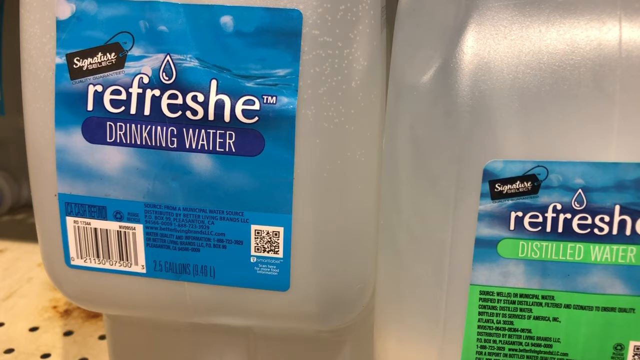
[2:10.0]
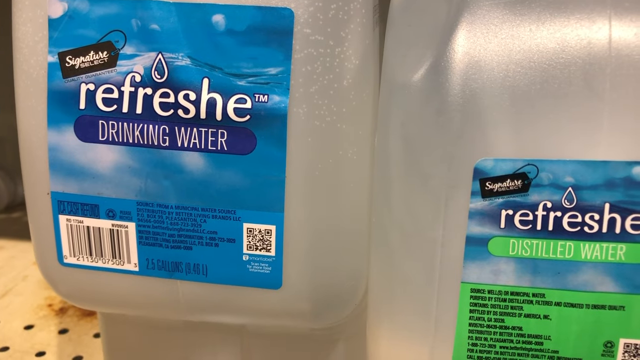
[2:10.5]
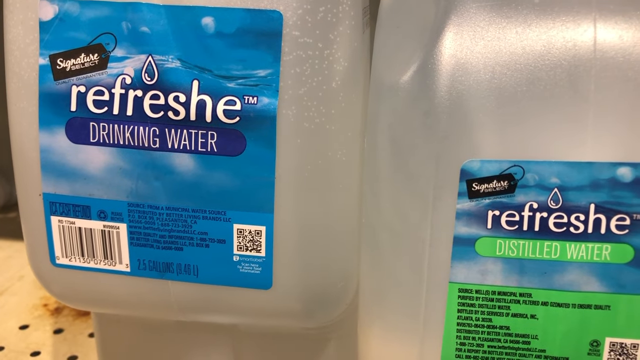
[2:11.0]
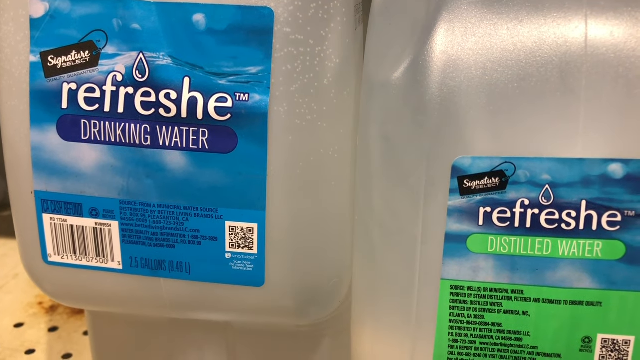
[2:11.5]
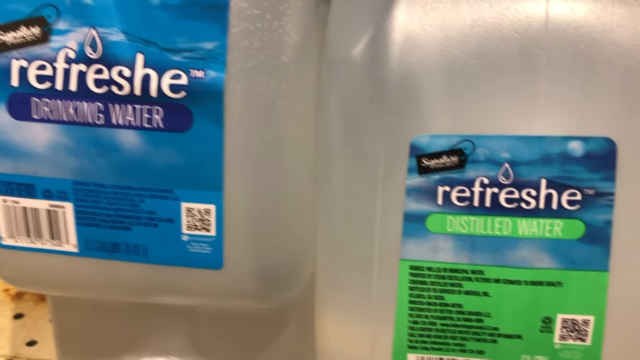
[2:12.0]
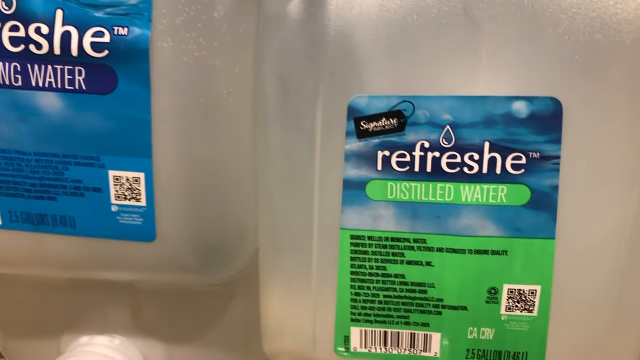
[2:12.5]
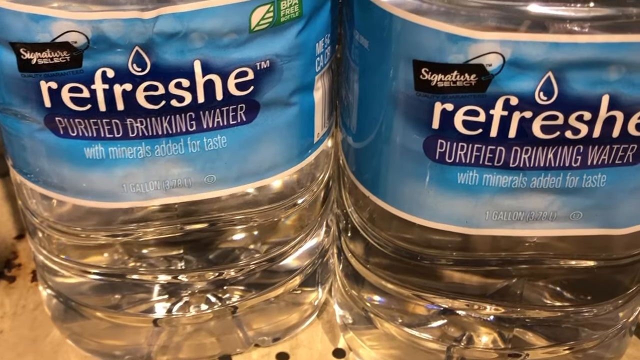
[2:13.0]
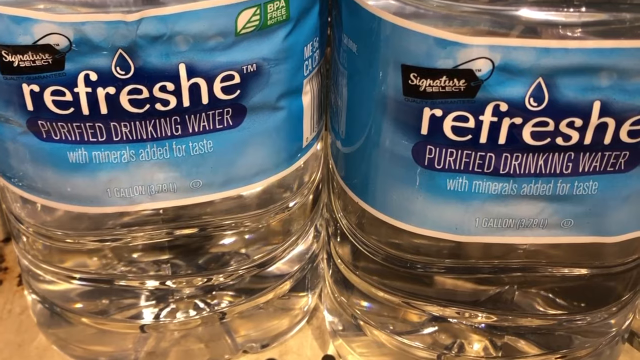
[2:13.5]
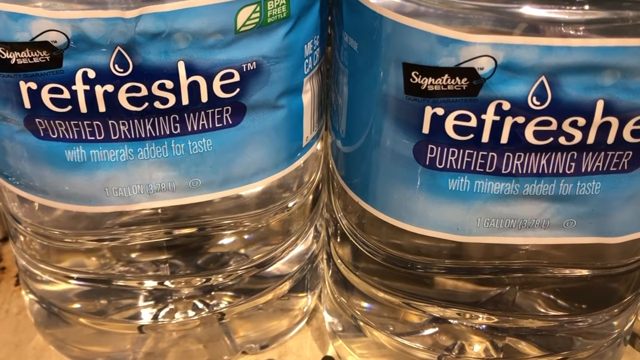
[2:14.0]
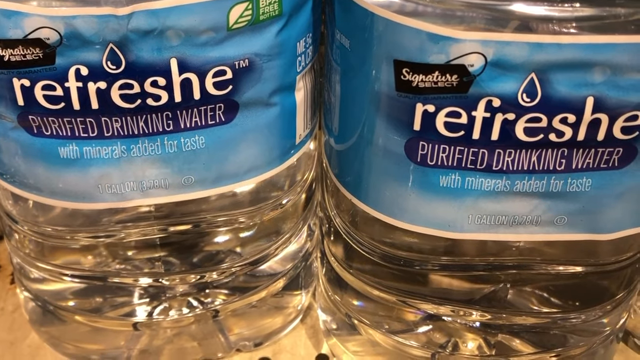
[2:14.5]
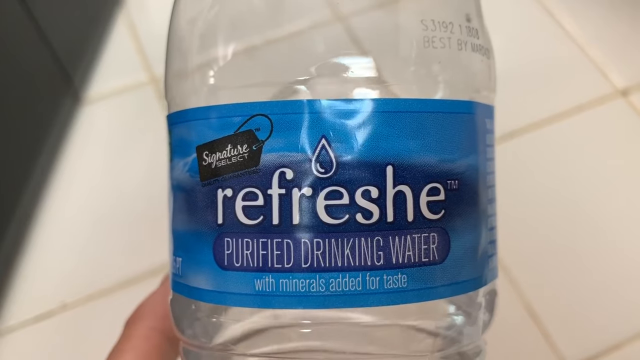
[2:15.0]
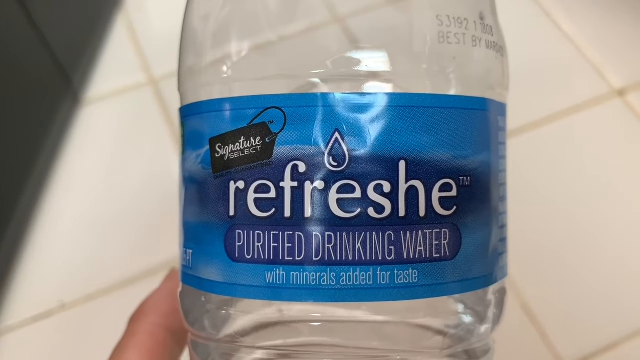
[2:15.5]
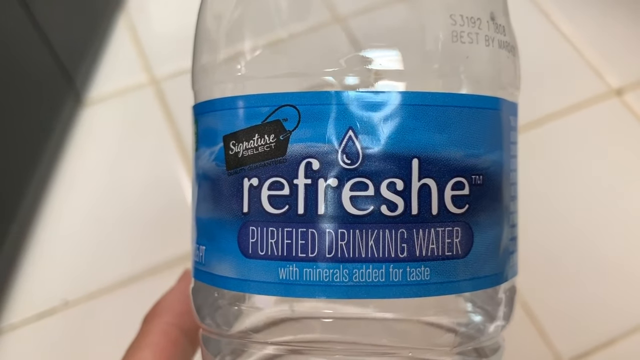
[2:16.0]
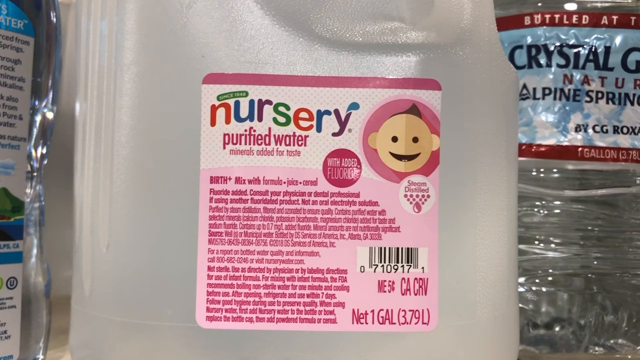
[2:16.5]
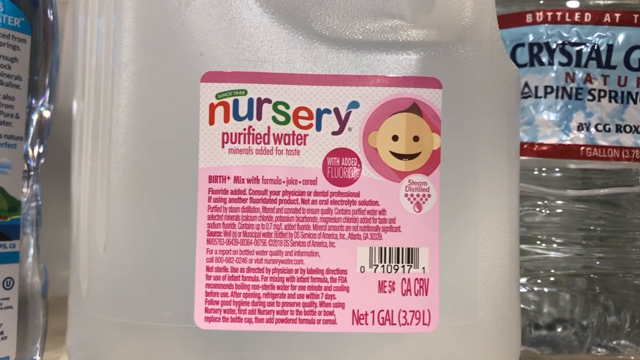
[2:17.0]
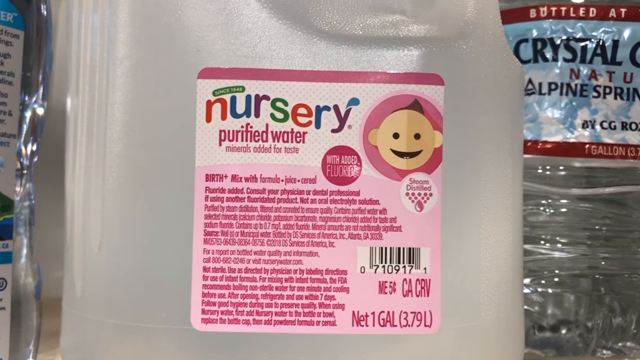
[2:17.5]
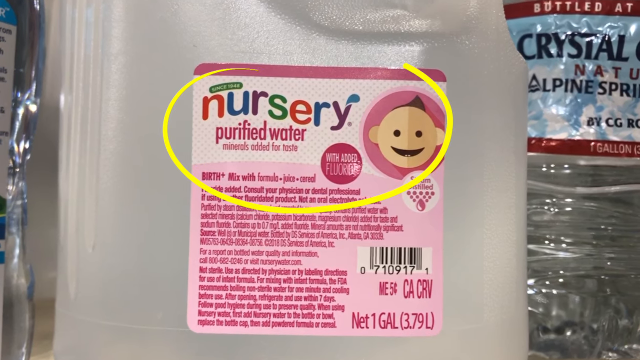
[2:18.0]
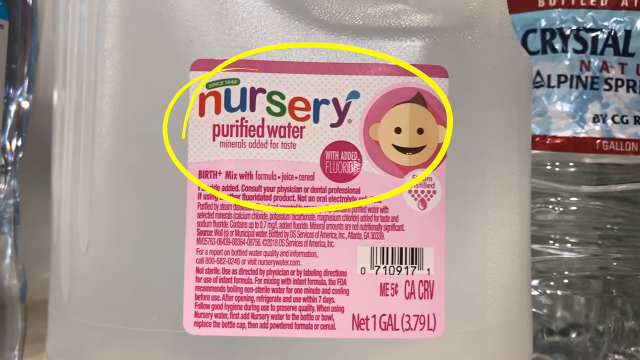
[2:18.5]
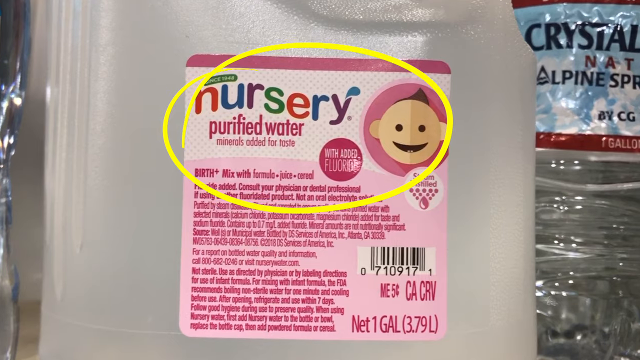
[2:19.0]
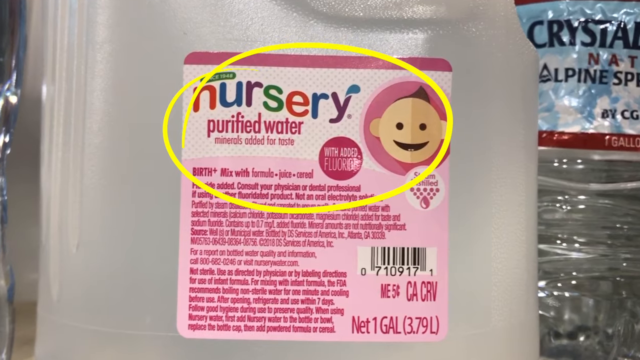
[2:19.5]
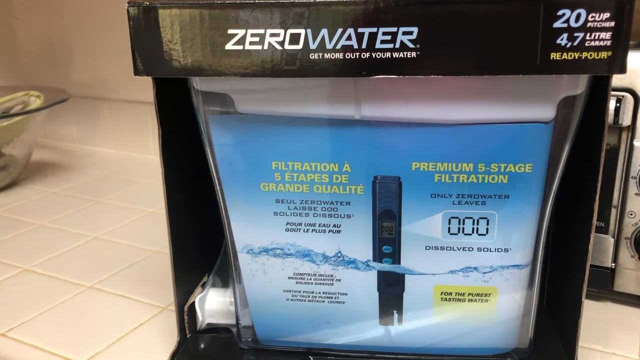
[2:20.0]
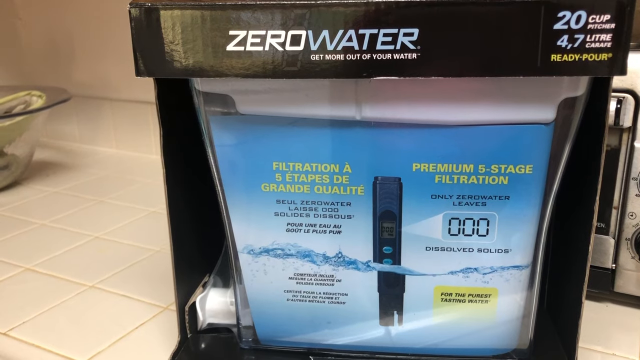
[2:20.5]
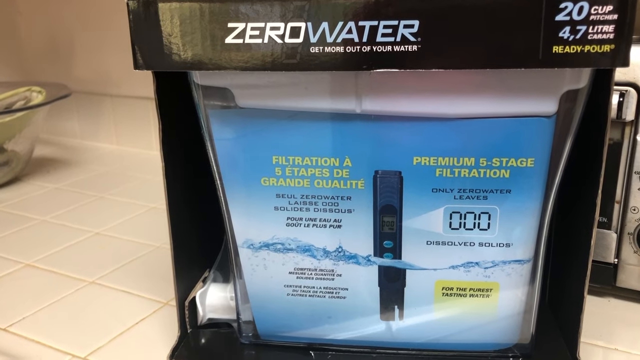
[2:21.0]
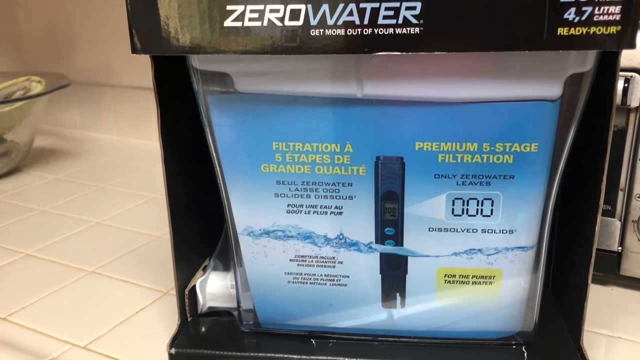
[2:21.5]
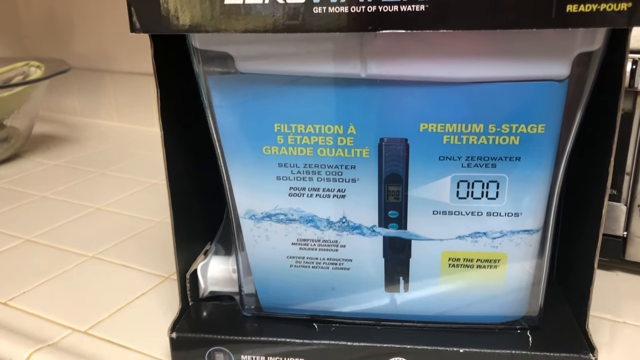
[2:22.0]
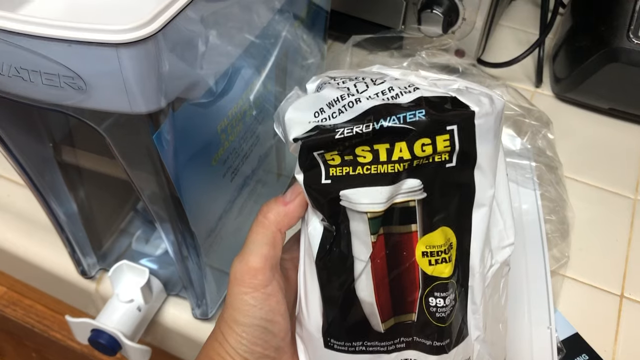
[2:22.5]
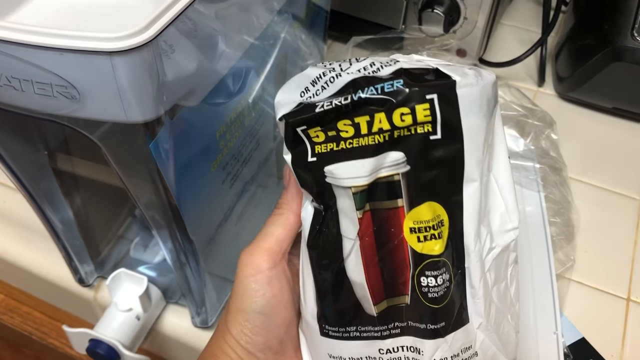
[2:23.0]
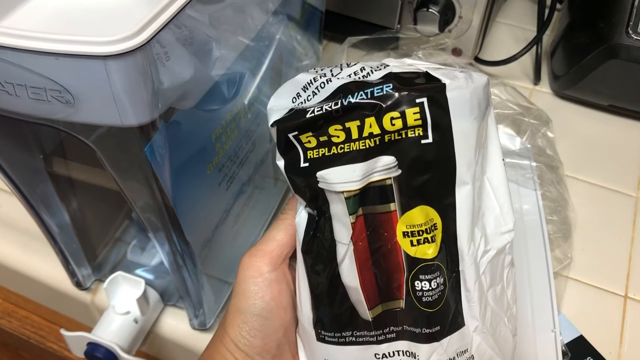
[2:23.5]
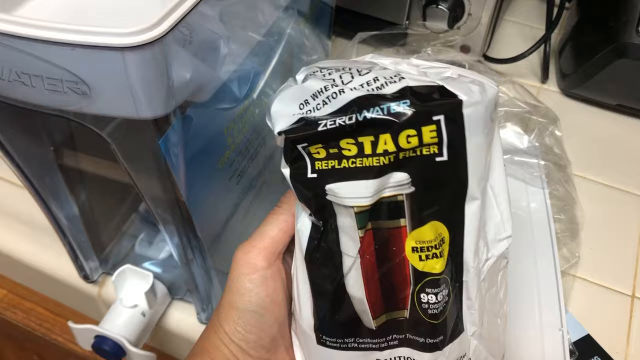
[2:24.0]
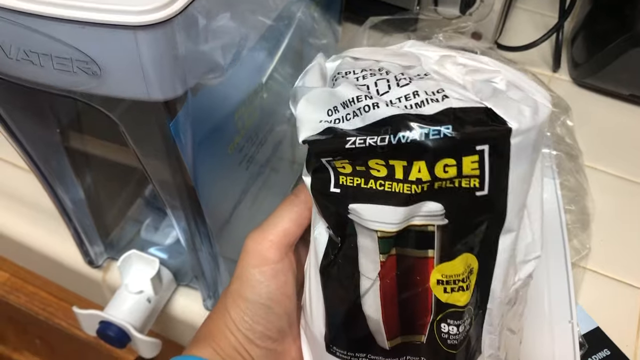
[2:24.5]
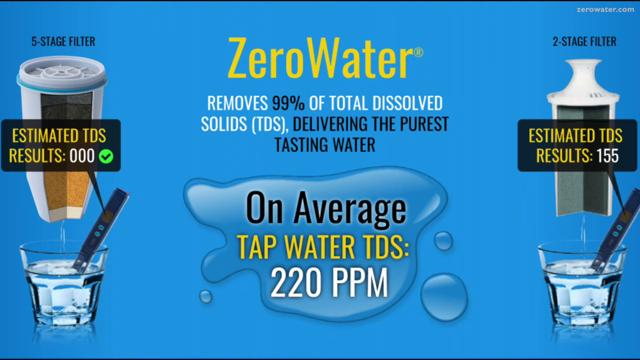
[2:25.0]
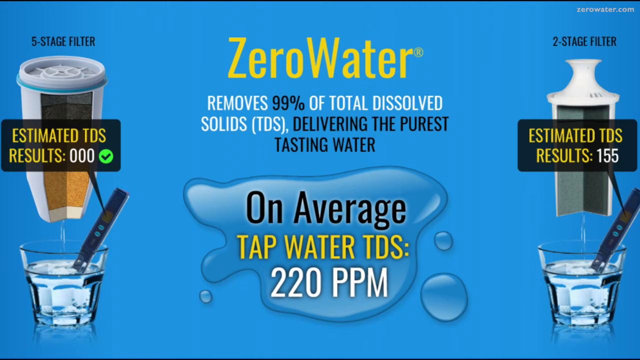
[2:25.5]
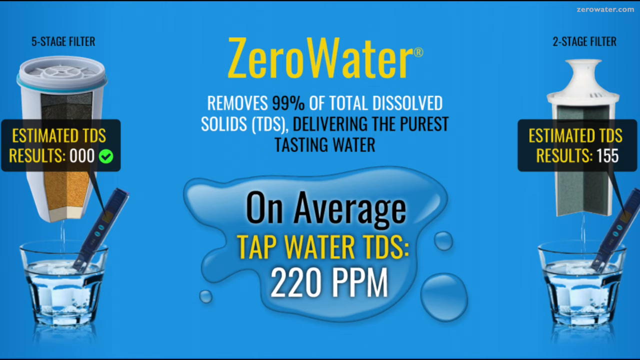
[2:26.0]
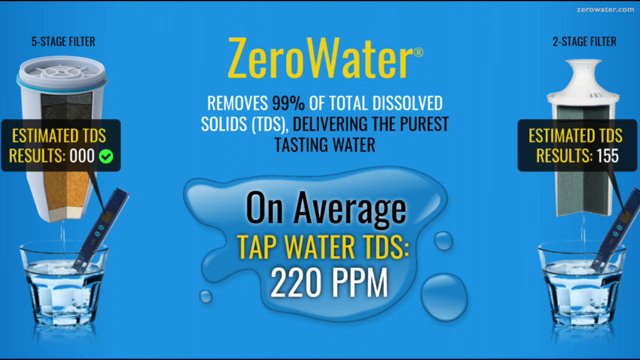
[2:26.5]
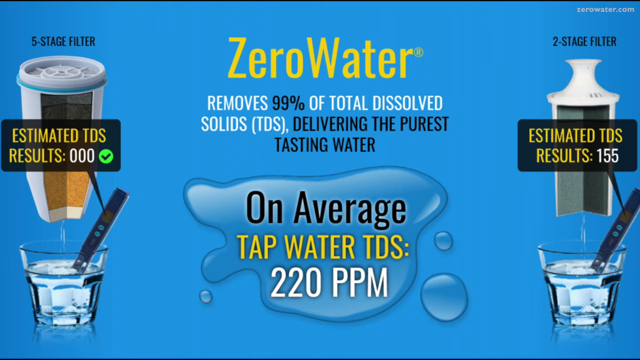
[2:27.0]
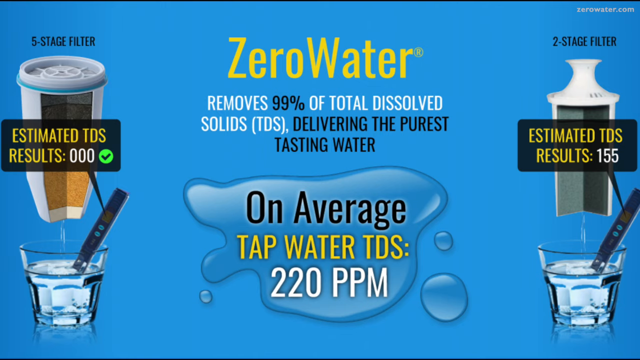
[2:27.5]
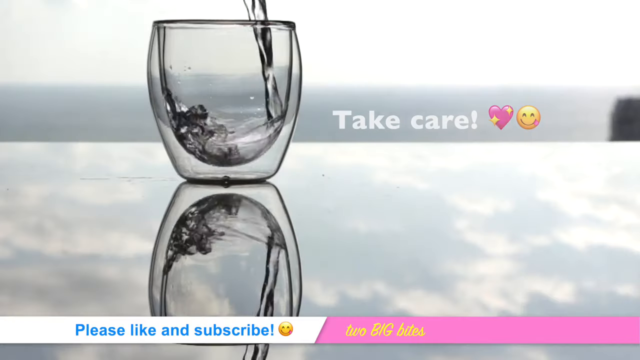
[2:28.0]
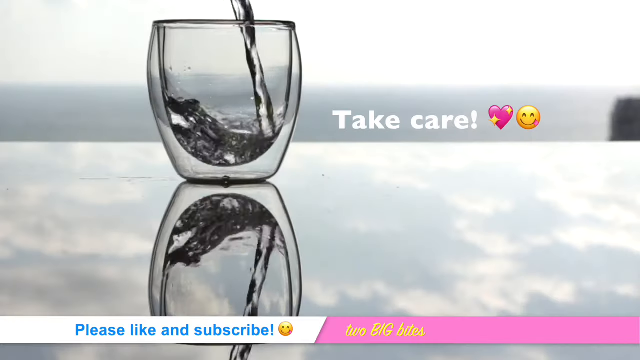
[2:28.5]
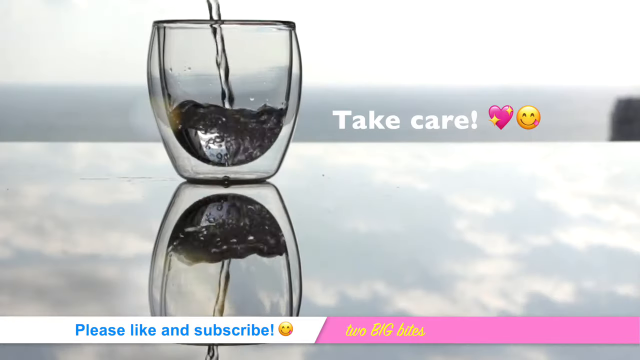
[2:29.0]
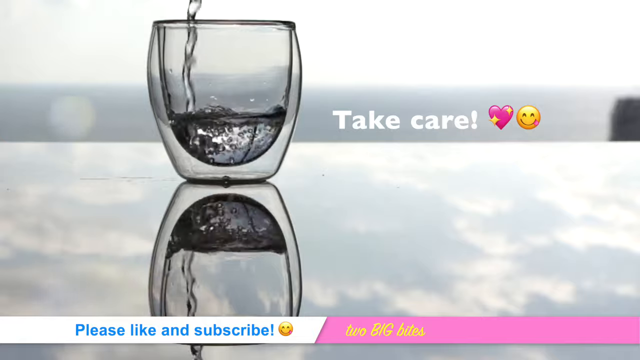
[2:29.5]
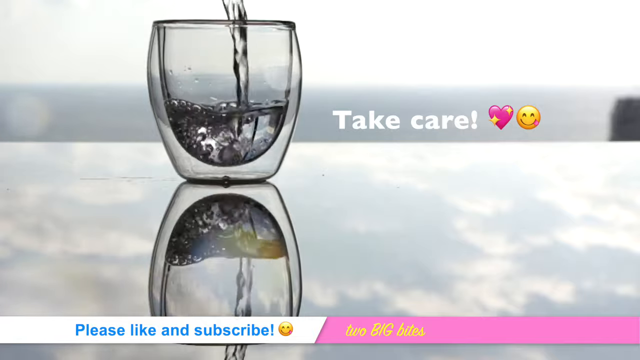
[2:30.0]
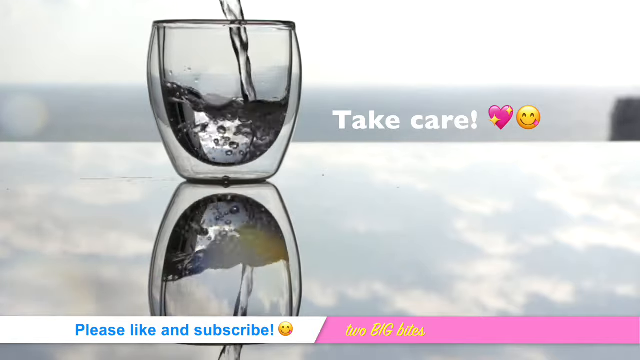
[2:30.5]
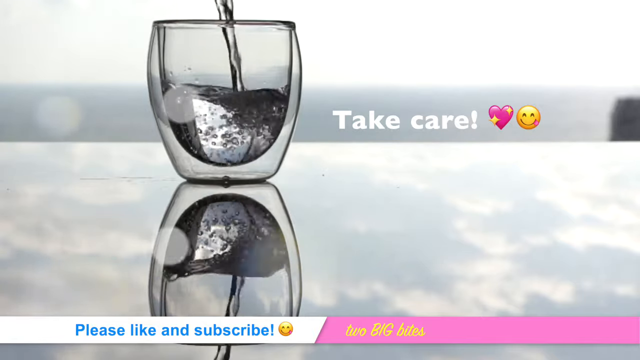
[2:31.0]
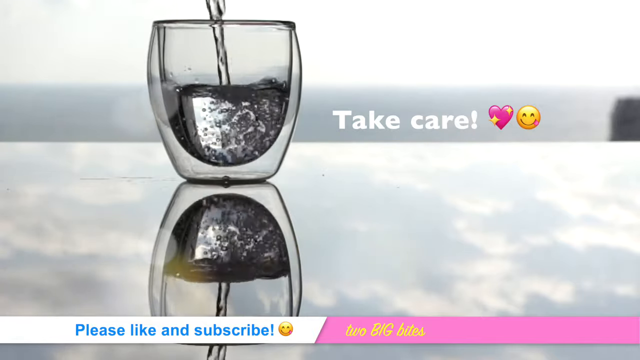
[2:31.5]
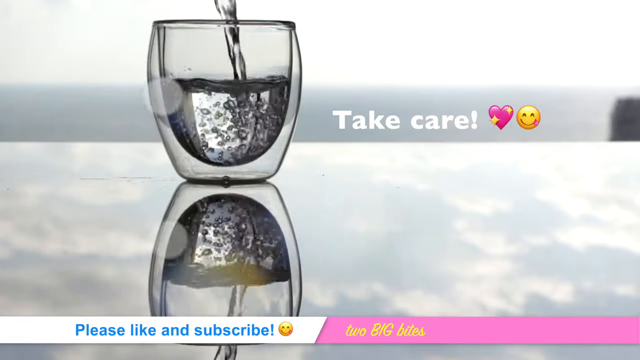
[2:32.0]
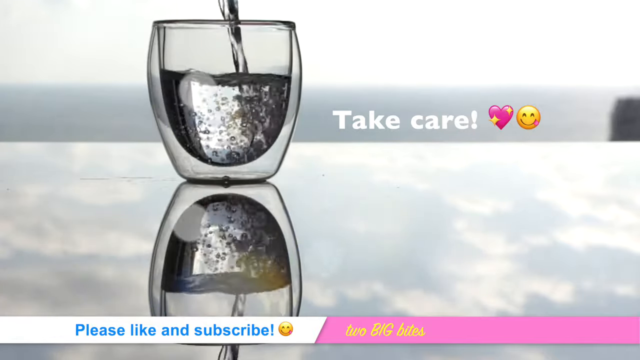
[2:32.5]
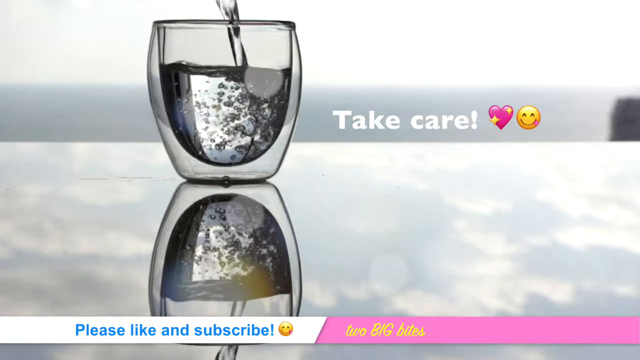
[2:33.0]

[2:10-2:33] Different gallons of Refresh water are shown: Refresh drinking water and Refresh distilled water in two different plastic bottles, half a gallon of Refresh, and a different type of plastic bottle holding a gallon of Nursery purified water with a little baby in the photo. The camera zooms in on the contents of the Nursery water. A black box showing the Zero Water brand is shown with the Zero Water filter, with "20 cups" for the pitcher and "4.7 liters ready to pour" in the right corner; it also comes with a TDS indicator along with the filter. The person holds a replacement filter for the Zero Water filter in a black and white bag with yellow writing. A blue screen from Zero Water states "removing 99% of total dissolved solids, delivering the purest tasting water", along with estimated results of 0, 0, 0, an estimated eliminated TDS of 155, and "On average, tap water TDS is 220 ppm." Finally, someone pours pure water into a glass cup with the words "take care", a heart, and a smiley emoji.